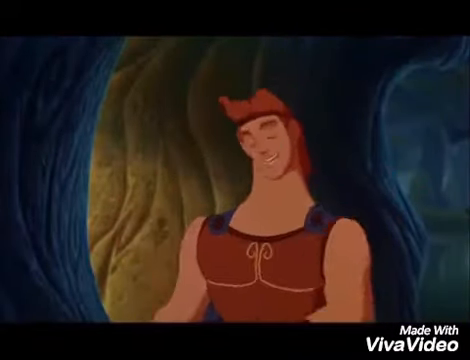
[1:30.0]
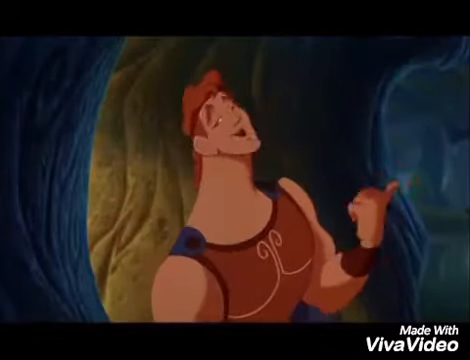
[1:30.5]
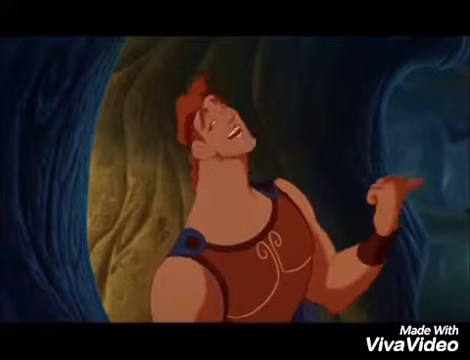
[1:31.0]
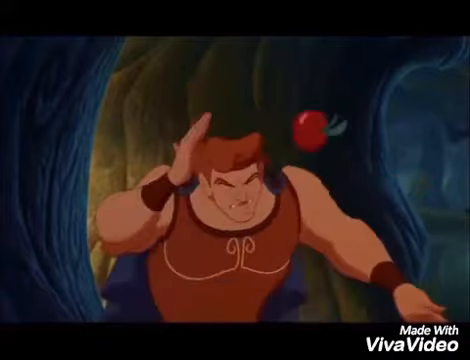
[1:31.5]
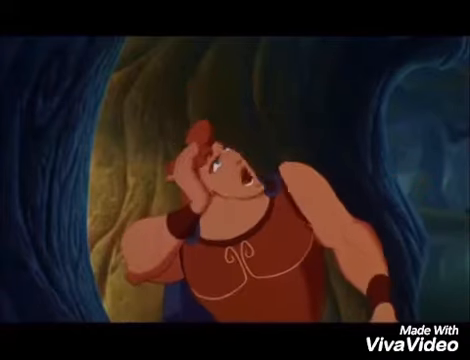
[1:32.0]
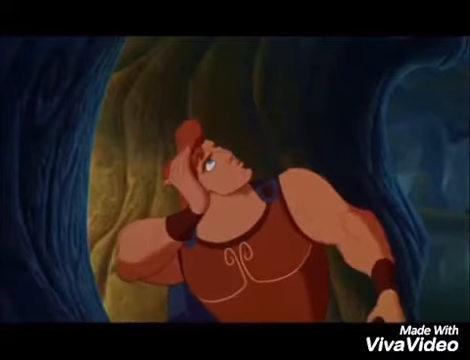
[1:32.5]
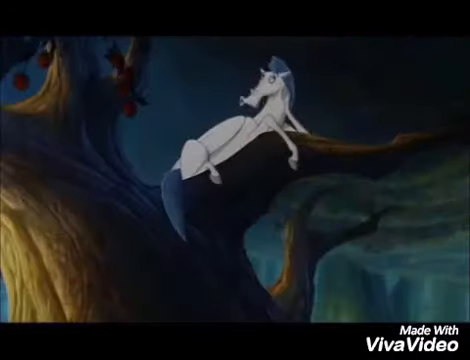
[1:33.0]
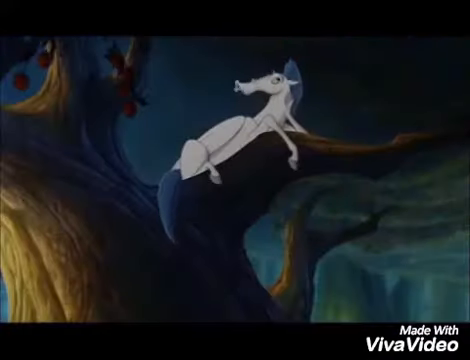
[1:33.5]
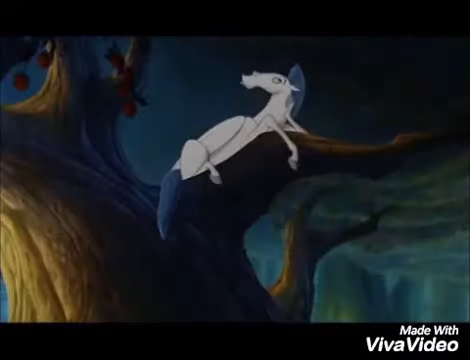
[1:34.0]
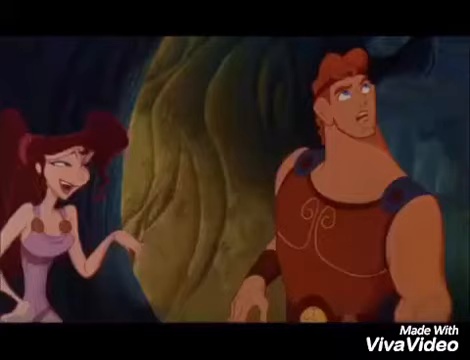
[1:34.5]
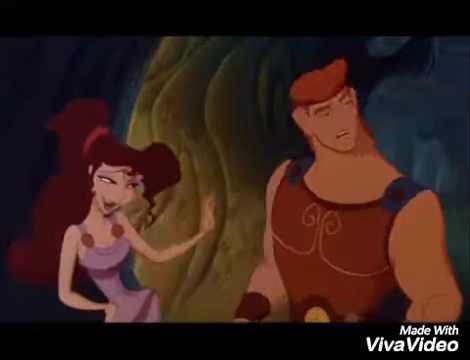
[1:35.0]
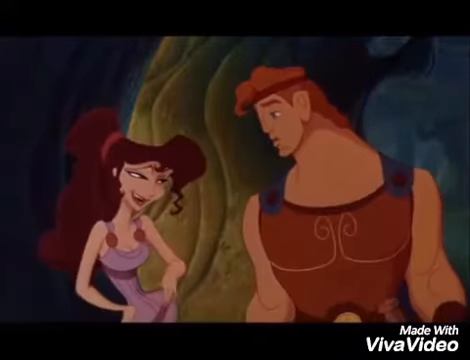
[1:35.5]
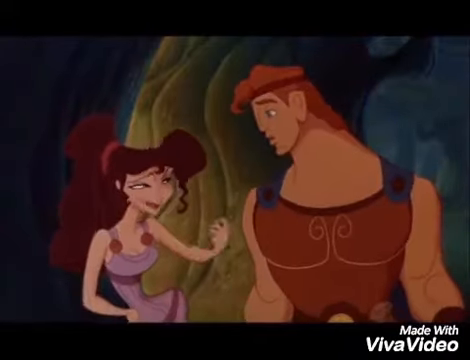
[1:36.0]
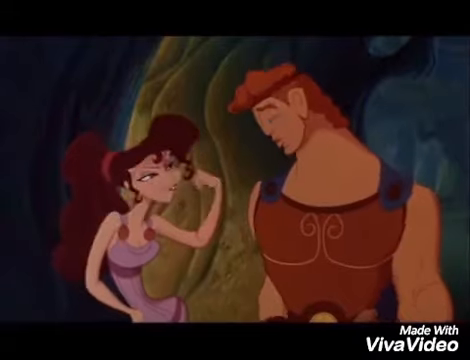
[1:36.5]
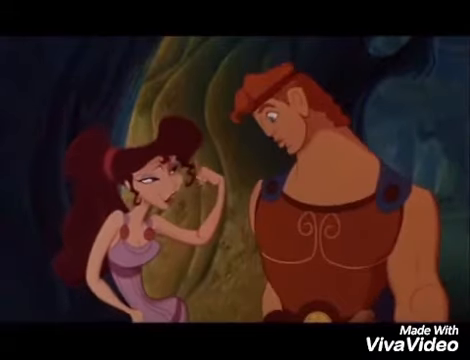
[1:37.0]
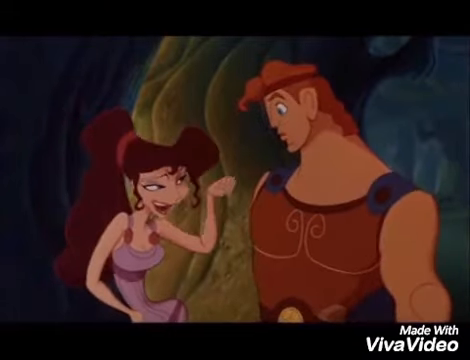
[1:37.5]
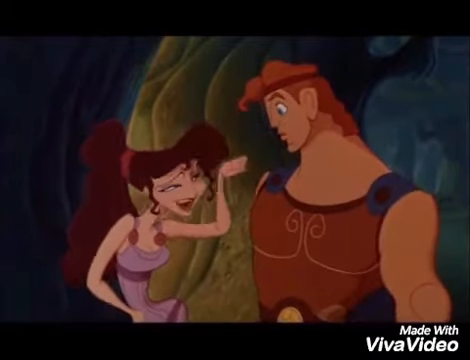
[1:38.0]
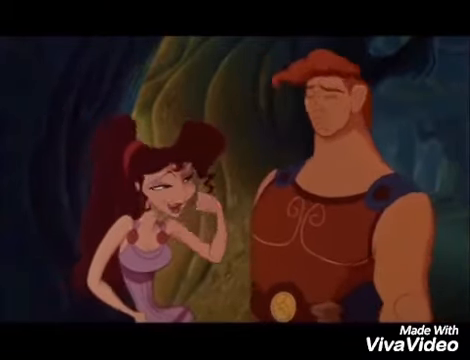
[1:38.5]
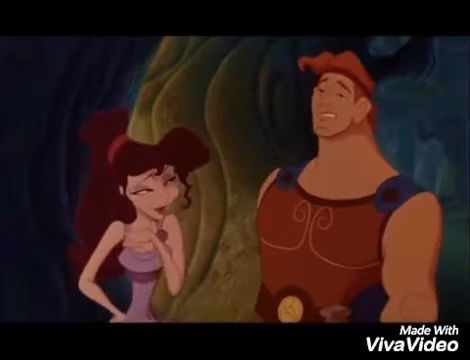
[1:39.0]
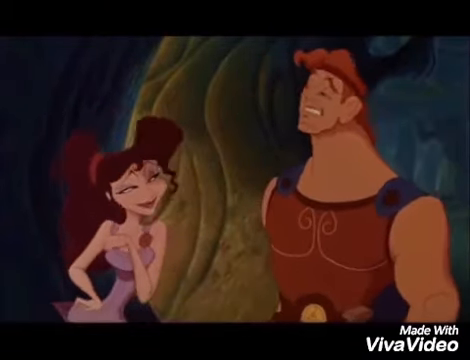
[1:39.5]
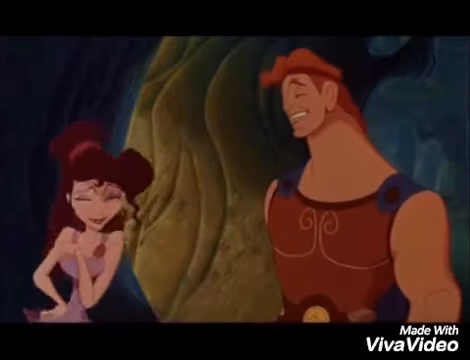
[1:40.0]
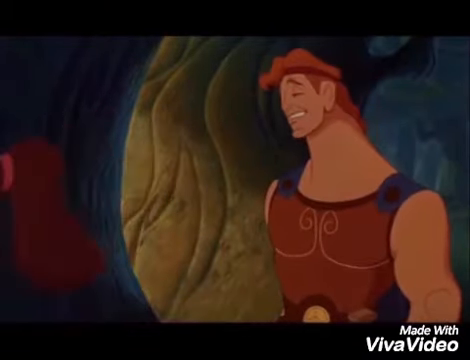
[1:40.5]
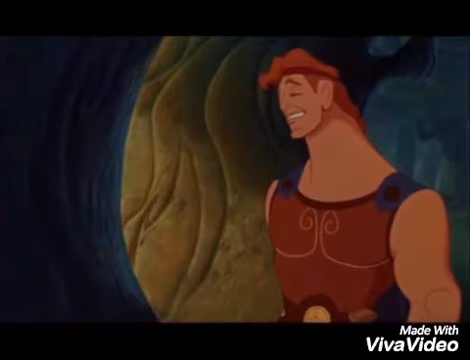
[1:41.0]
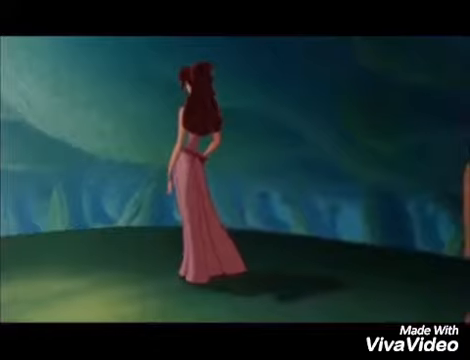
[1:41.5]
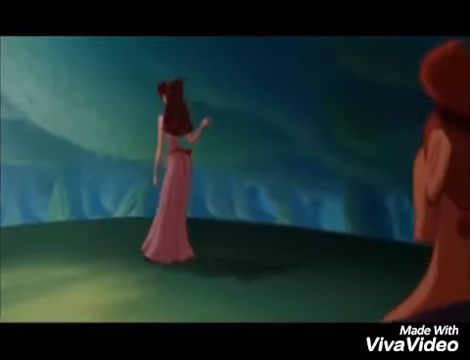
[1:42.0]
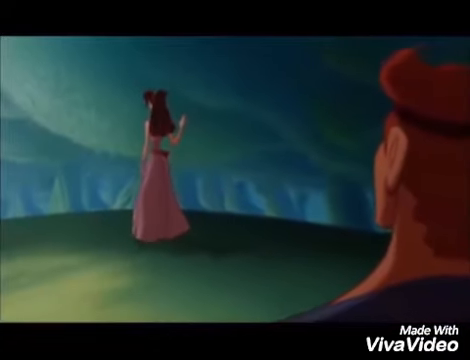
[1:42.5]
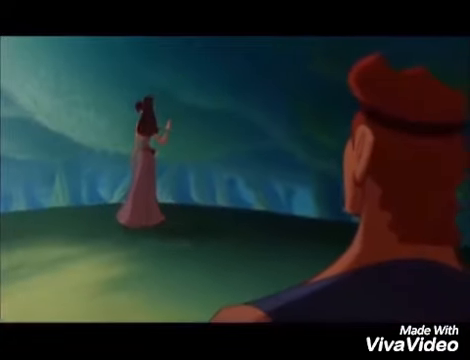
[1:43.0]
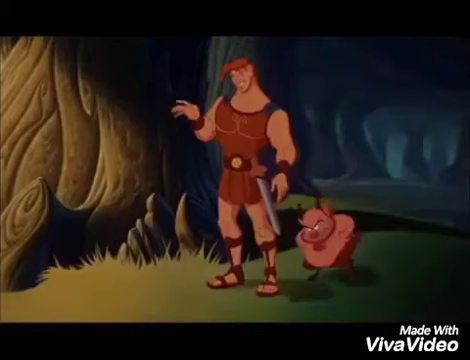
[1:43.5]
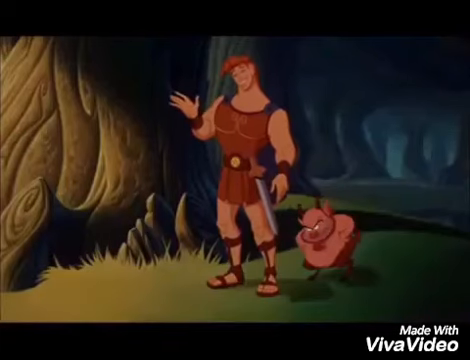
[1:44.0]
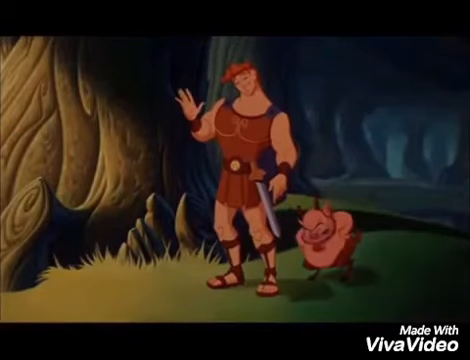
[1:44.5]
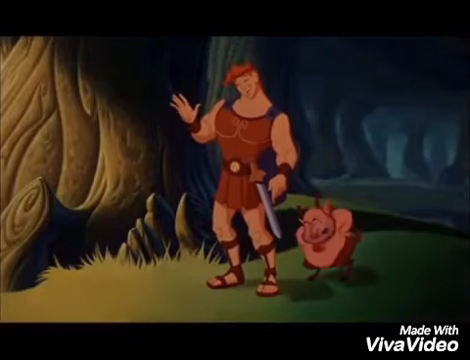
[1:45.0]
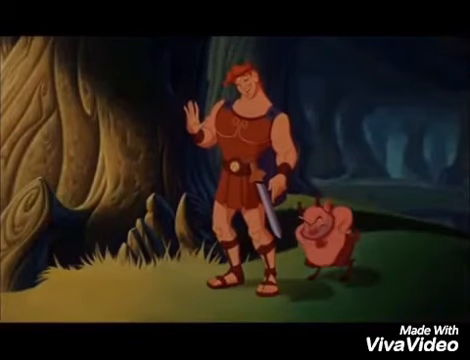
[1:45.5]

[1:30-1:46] The guy apparently tries to get the horse to calm down, but the horse is not having it. He points up to the tree and tells the lady to come back, but the horse is not there. The horse throws an apple down from the top of the tree to the guy, who looks up, surprised. The lady comes back and touches the guy's face; he looks up and smiles a bit. The lady makes a sign that she is strong, pinches the guy once again and walks away, and the guy waves goodbye. The dark guy with the sword beside him remains there, and the little creature with the horn and the beard looks kind of furious, with a very angry face.